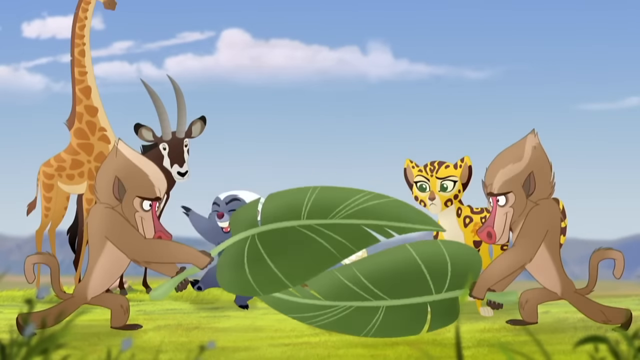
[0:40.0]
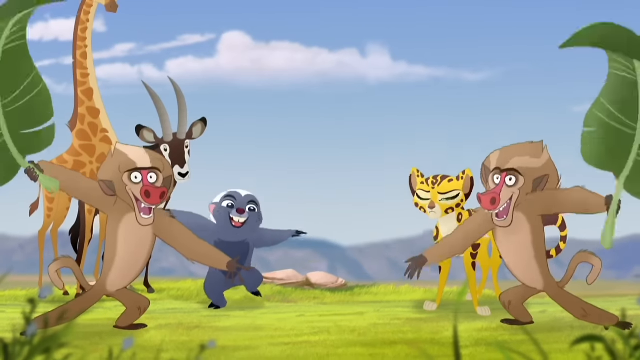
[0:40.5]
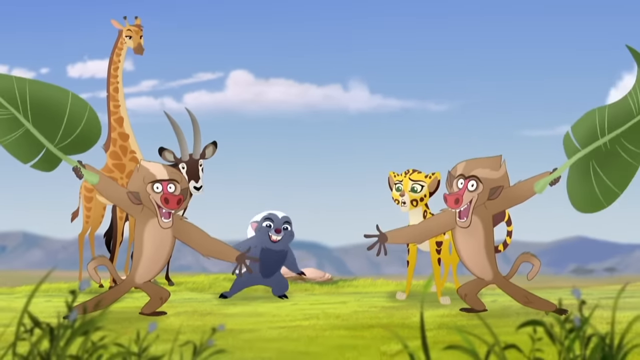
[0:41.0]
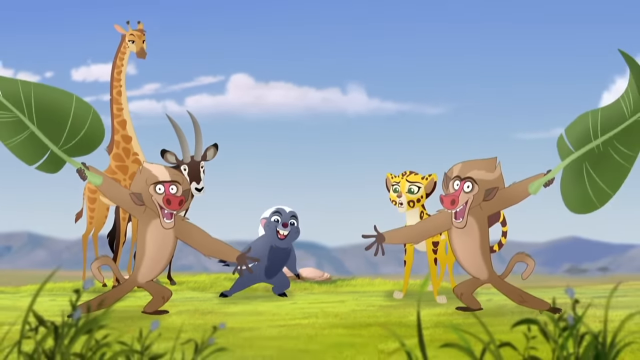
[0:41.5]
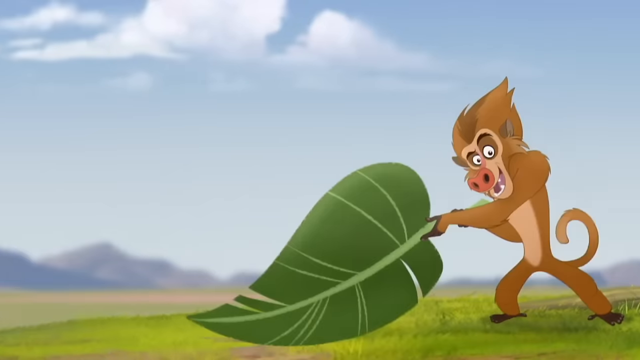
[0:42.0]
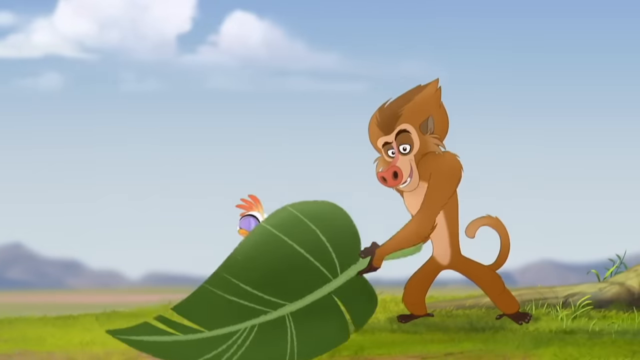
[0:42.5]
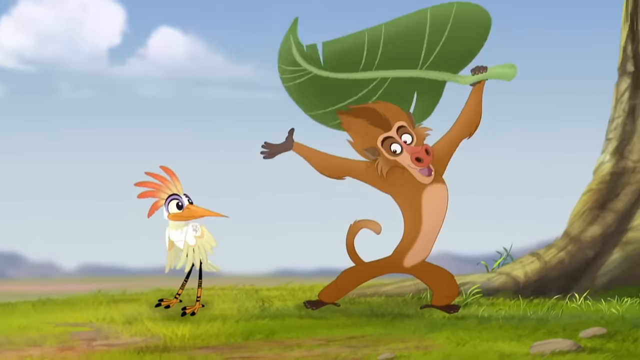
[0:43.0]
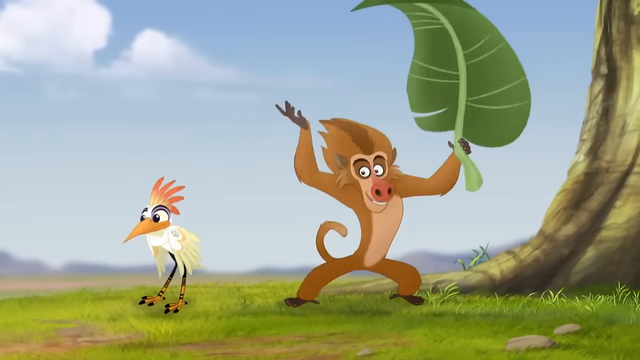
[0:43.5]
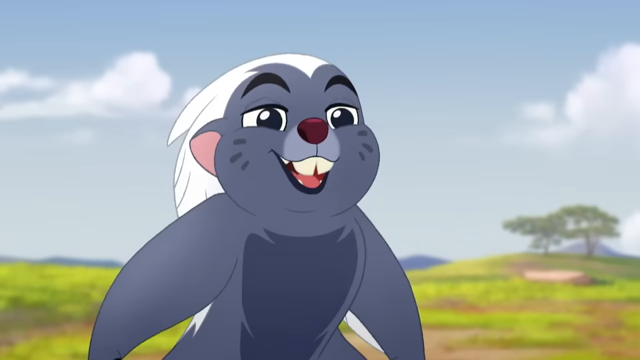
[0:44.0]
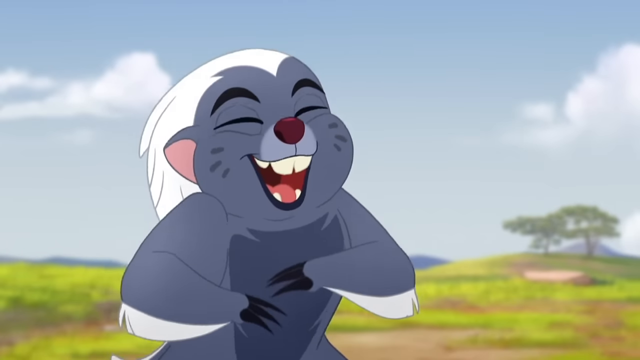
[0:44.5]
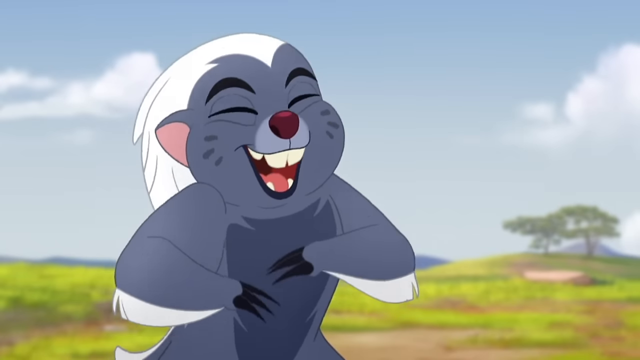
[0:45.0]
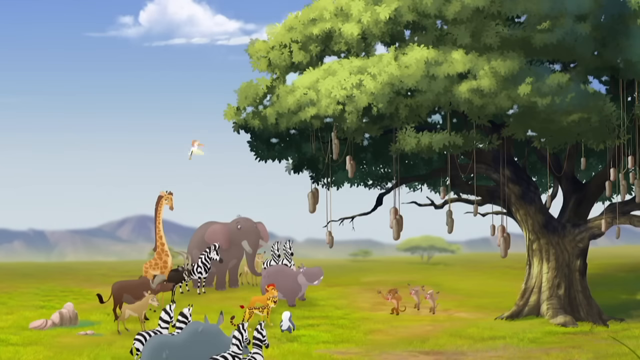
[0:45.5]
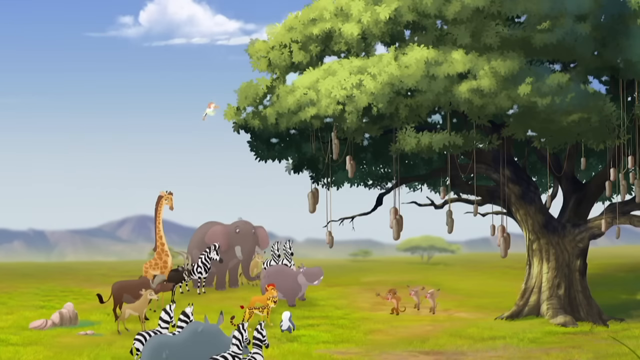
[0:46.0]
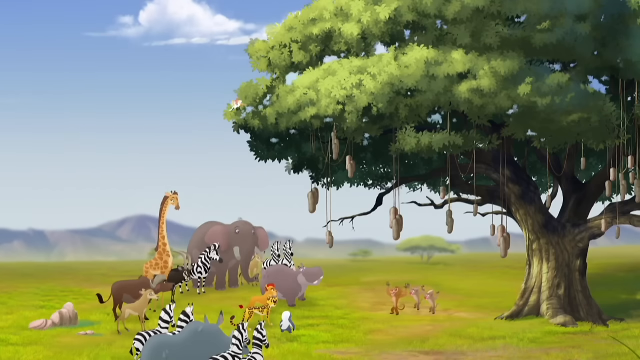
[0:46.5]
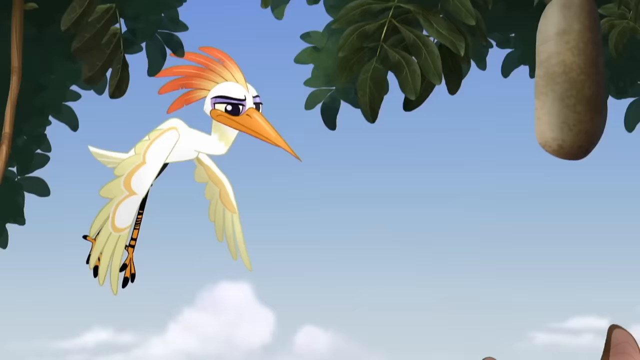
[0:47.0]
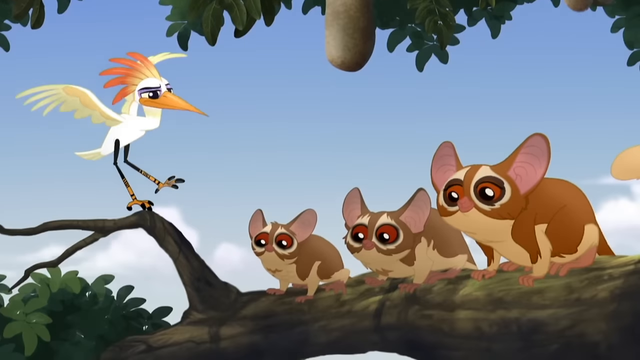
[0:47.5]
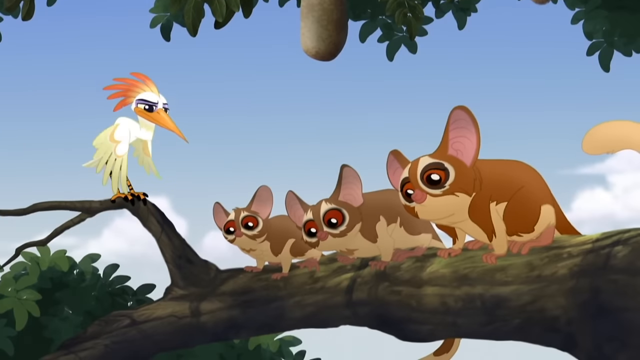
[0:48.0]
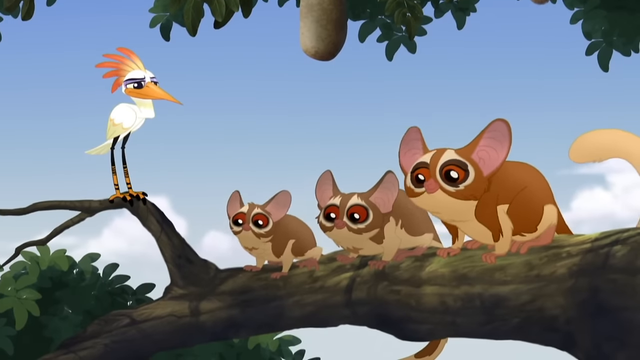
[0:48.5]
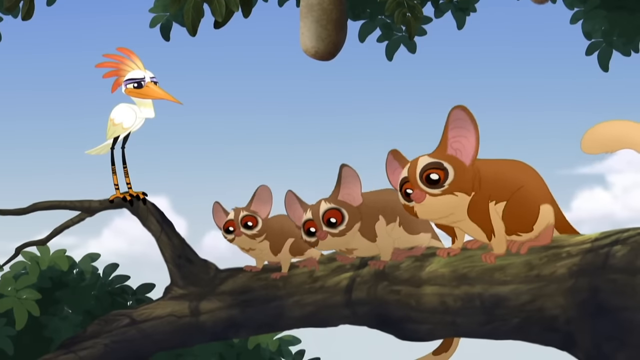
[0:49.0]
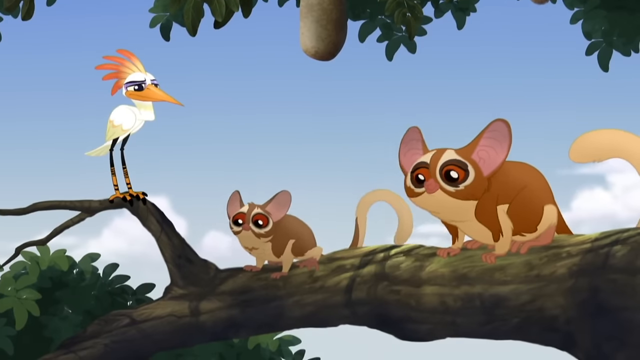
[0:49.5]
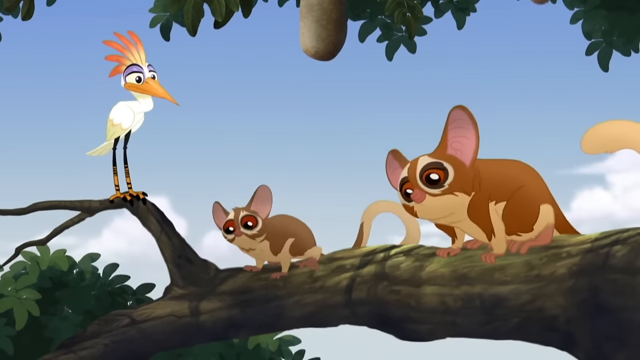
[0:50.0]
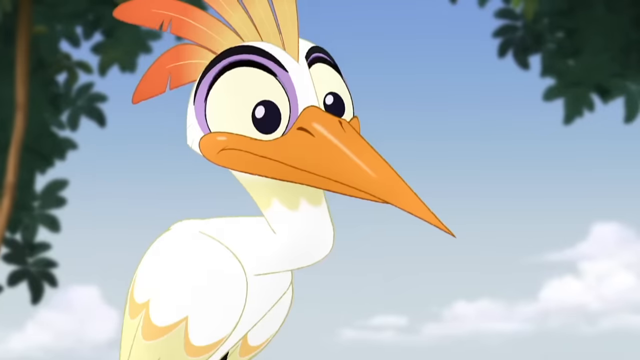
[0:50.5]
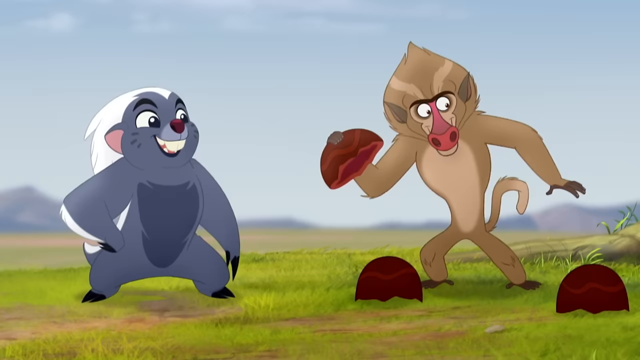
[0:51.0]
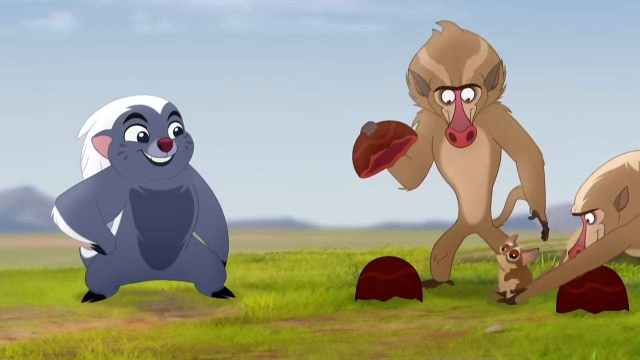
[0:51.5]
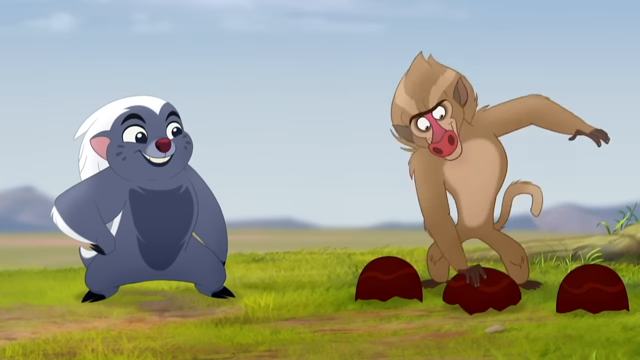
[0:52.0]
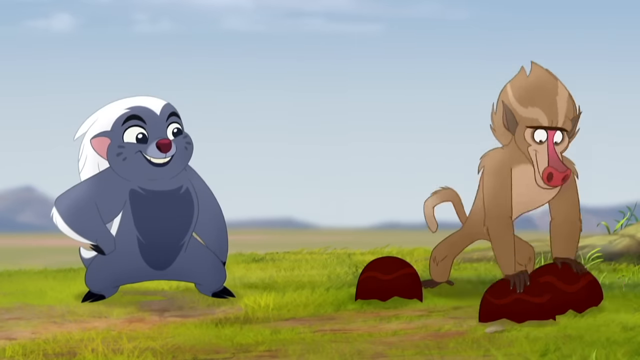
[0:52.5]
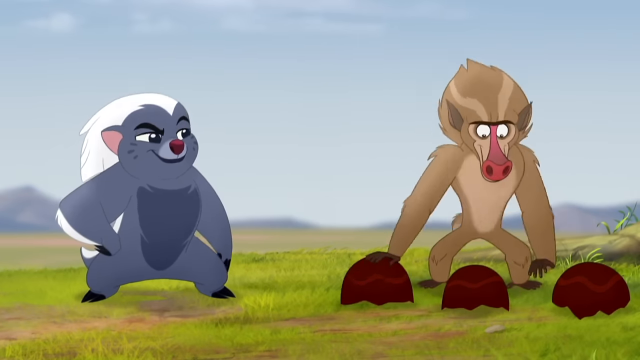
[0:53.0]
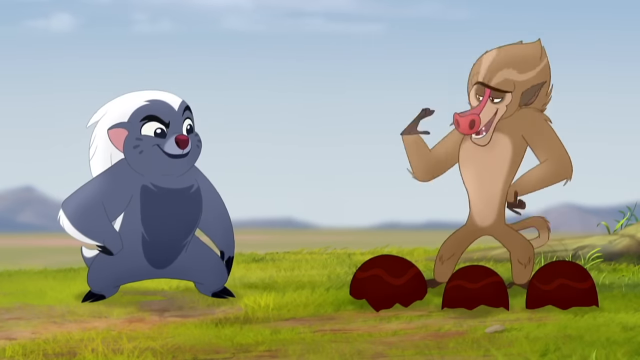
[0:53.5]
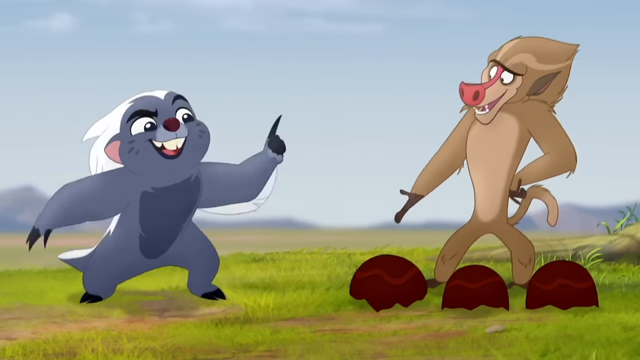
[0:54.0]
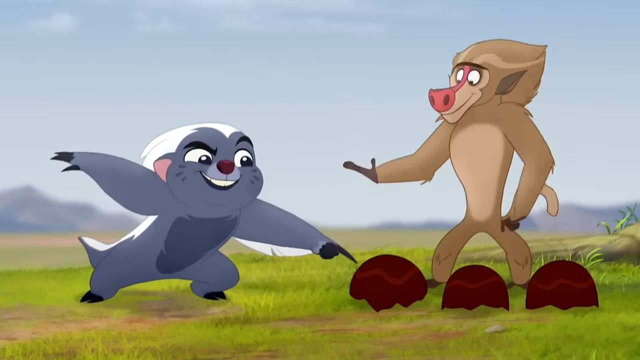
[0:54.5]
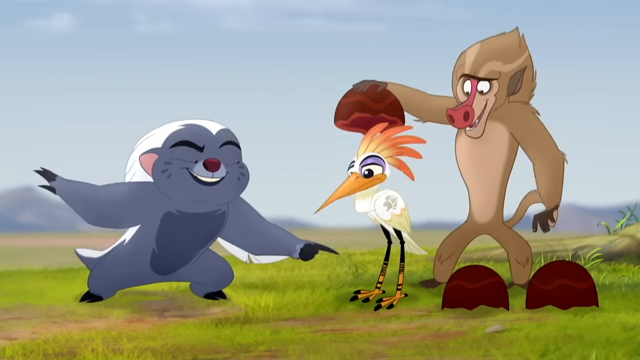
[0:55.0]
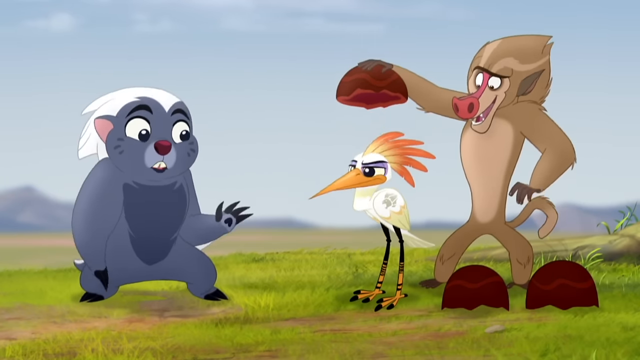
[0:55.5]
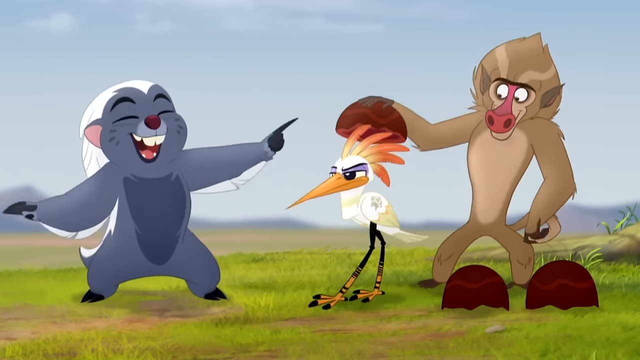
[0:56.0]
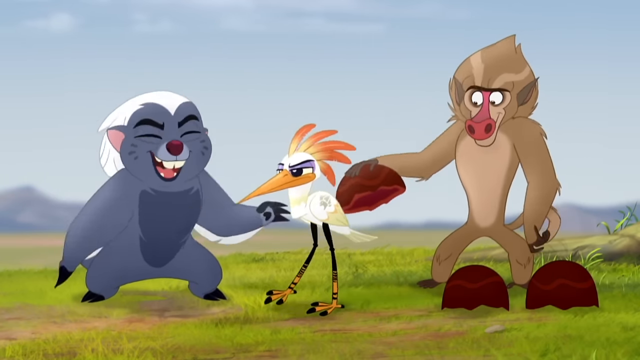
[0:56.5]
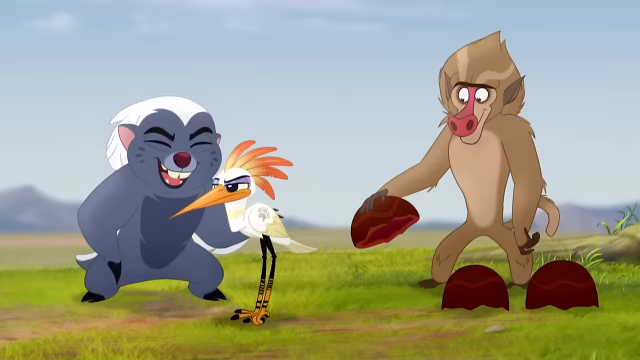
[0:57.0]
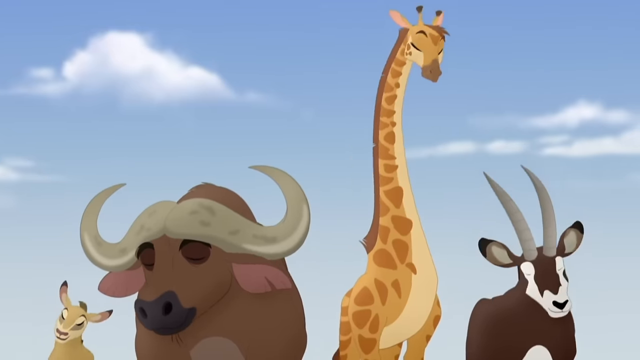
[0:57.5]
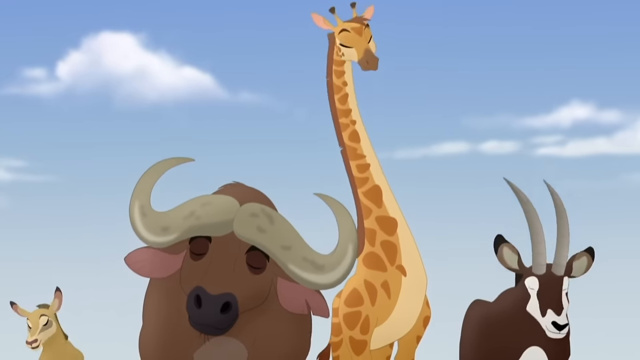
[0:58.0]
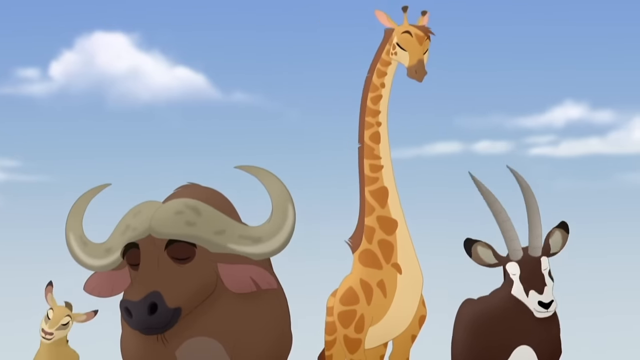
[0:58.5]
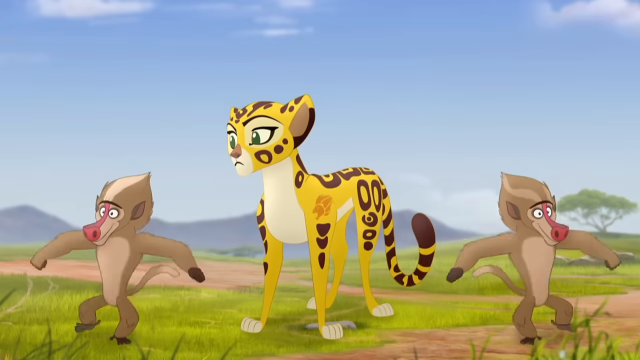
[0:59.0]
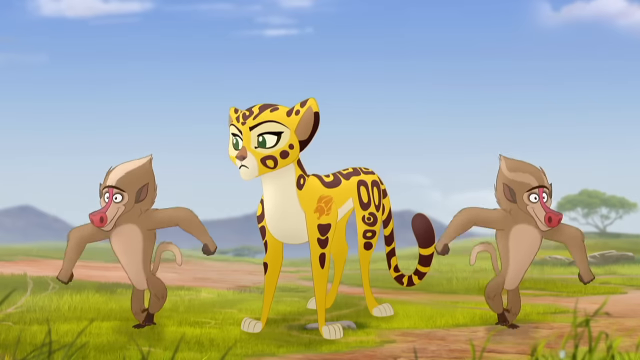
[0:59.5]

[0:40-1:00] The two baboons hold the palm tree branches over the bird, pull them away, and the bird is gone. A couple of the other animals look on, some looking surprised and some annoyed. The scene cuts to the darker brown baboon holding up a giant leaf, which he pulls away to reveal the white bird standing there, looking somewhat annoyed. One of the animals gets a close-up and is laughing. The white bird flies up to the tall tree, where three animals of a type of flying squirrel are sitting. A baboon grabs one and puts it under a coconut, doing a shell game with three coconuts in front of a raccoon-like animal. The baboon shuffles them, the raccoon points to one, and the white bird pops out and walks away very annoyed. The scene cuts back to the animals in a line, who seem to be dancing, apparently as part of a musical montage. Then a cheetah looks very annoyed at the two baboons dancing near her.